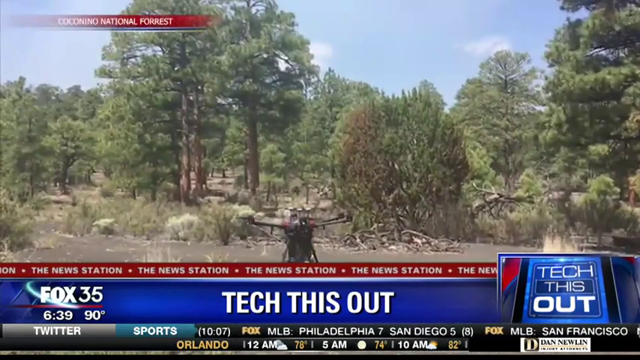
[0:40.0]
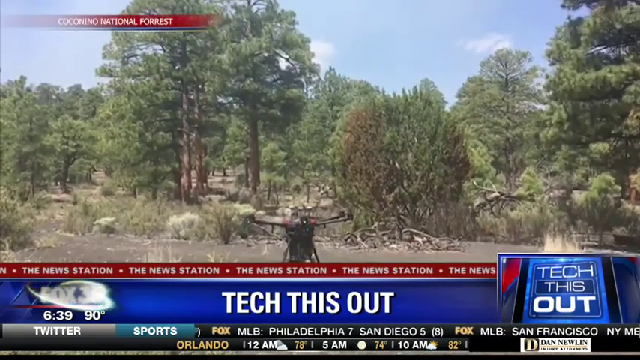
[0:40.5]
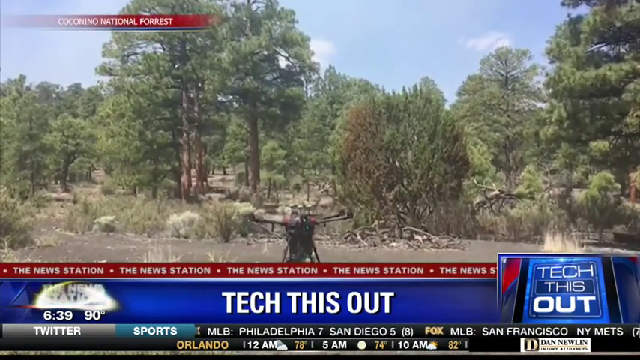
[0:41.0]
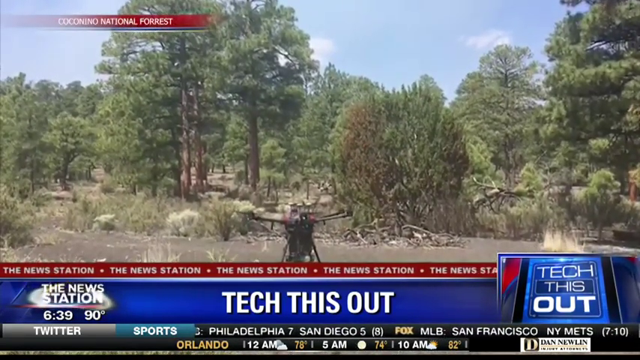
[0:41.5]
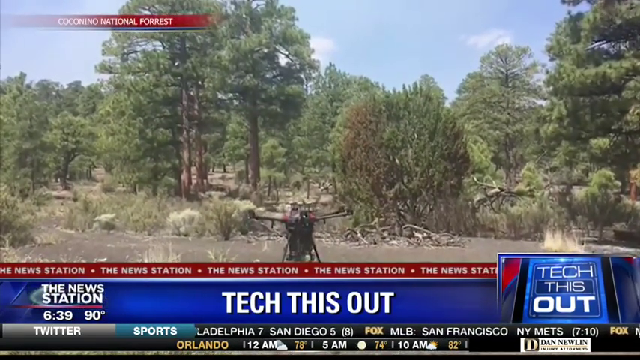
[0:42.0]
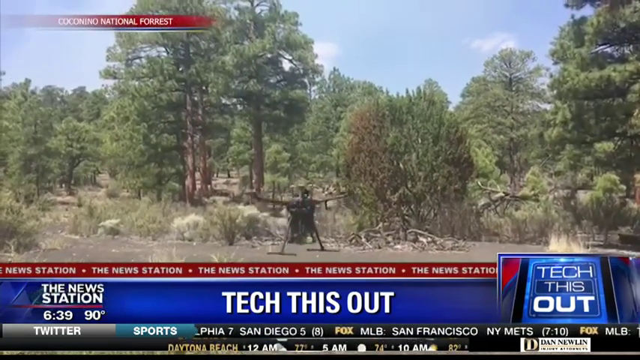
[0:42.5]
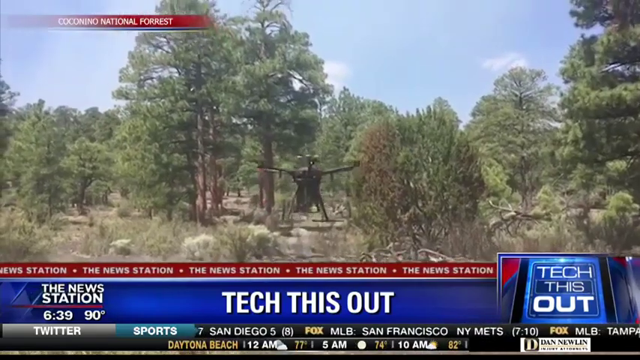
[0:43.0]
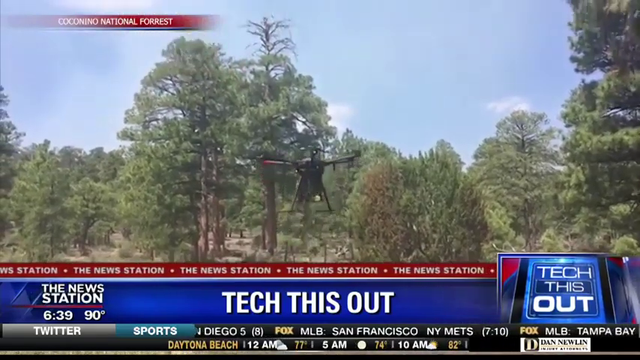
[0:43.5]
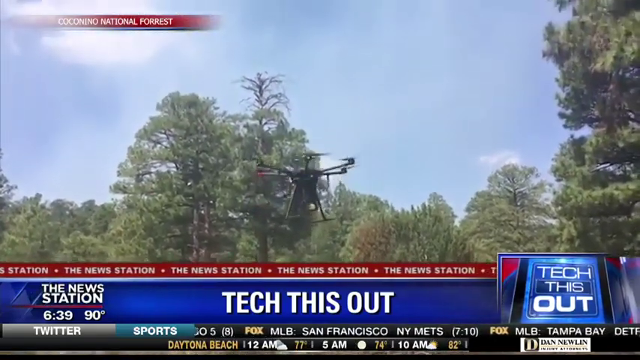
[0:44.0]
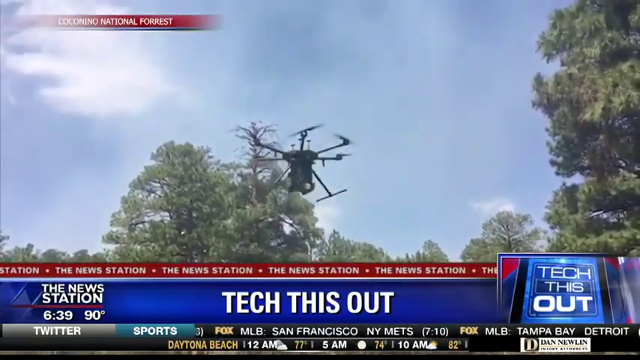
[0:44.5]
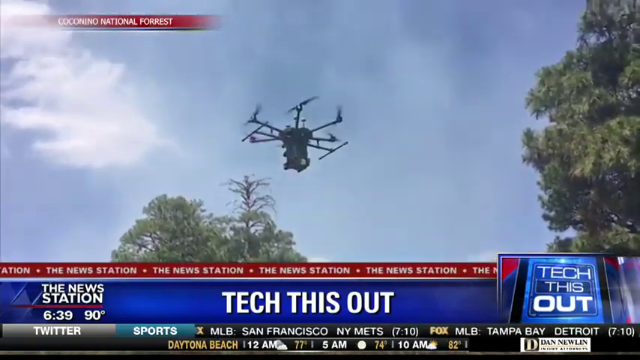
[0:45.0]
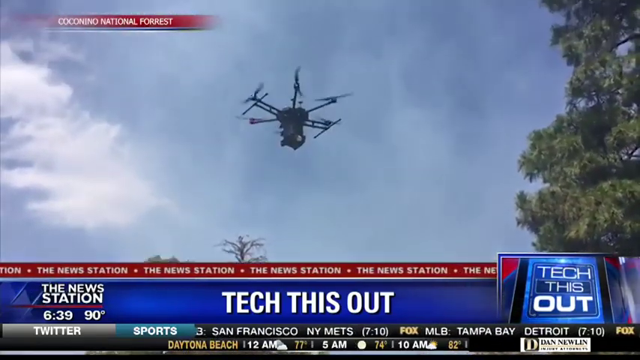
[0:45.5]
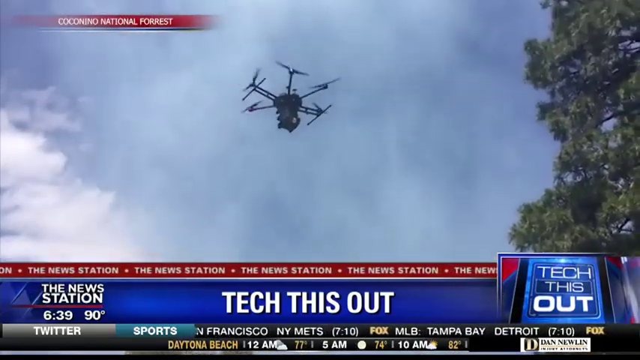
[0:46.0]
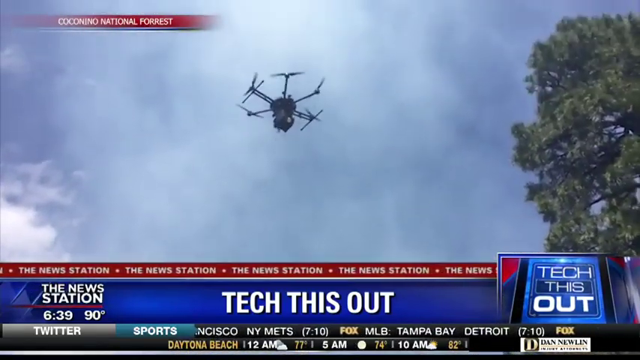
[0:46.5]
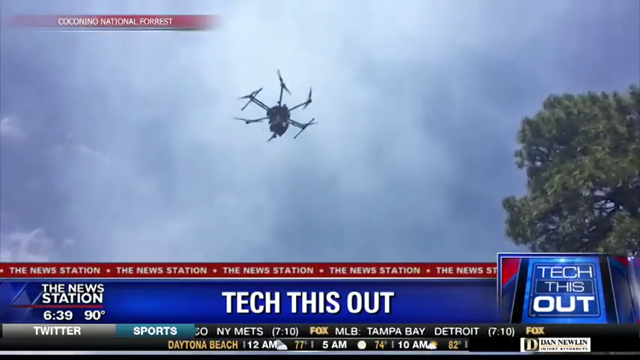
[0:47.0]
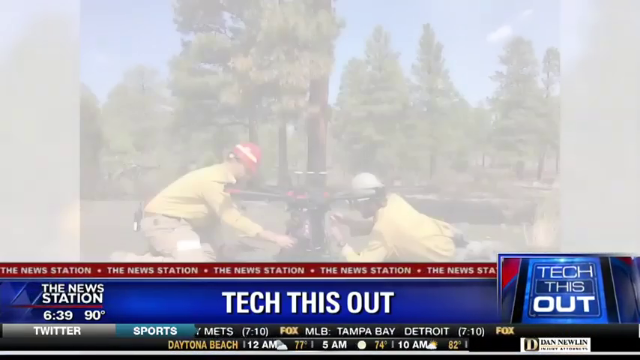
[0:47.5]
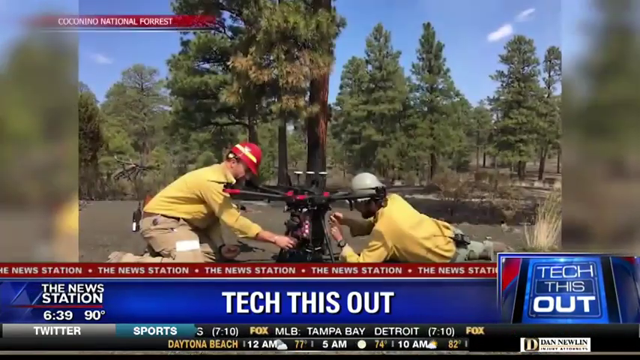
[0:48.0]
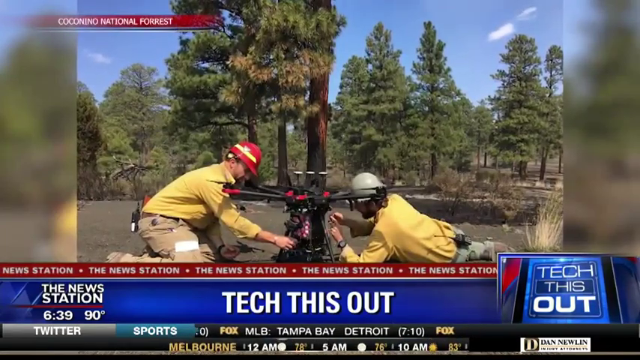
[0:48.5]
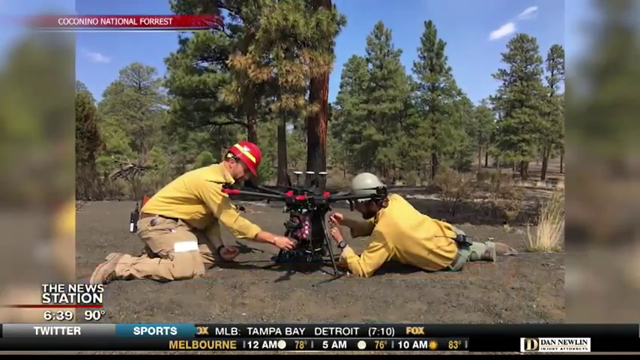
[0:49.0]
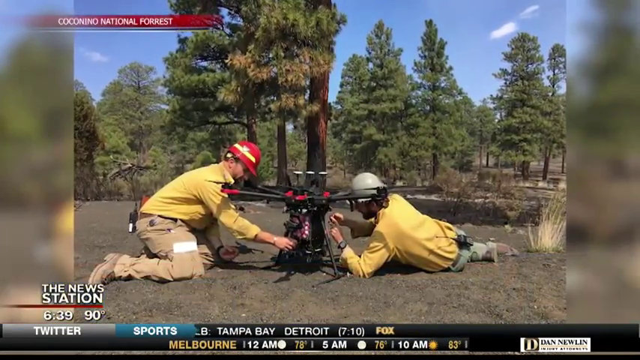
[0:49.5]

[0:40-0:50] In a forest, a drone intended to help fight wildfires is prepared for takeoff on a sunny day, with just a few wisps of hazy cloud high in the sky. It is quite a large drone, apparently with about six or eight rotor blades. Two engineers in yellow shirts and hard helmets work on it, and then it takes off from a clearing and flies up and away. Weather forecasts show Orlando at 78 degrees at midnight, rising to 82 degrees at 10am tomorrow morning; Daytona Beach is very similar, while Melbourne will be hotter, hitting 83 degrees at 10am. The broadcast is sponsored by Dan Newlin, and the drone footage comes from the Cococino National Forest.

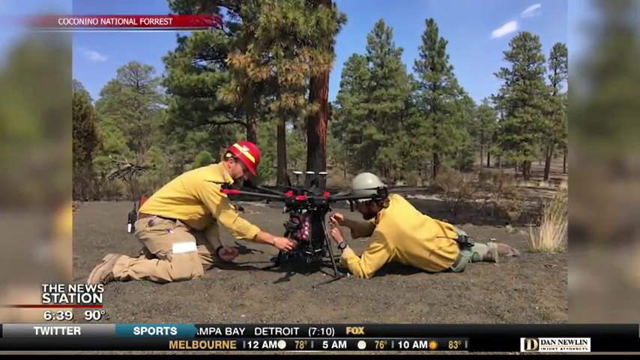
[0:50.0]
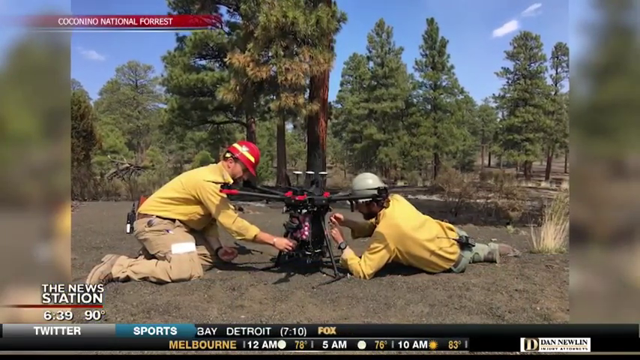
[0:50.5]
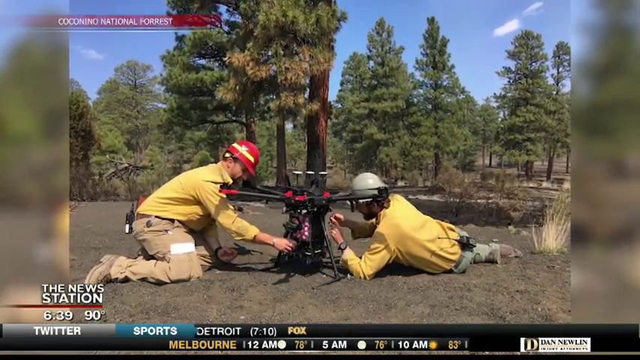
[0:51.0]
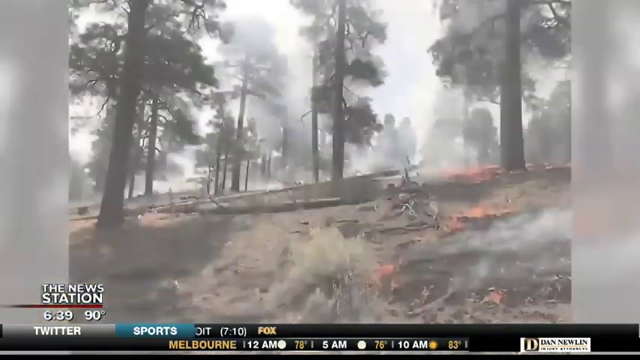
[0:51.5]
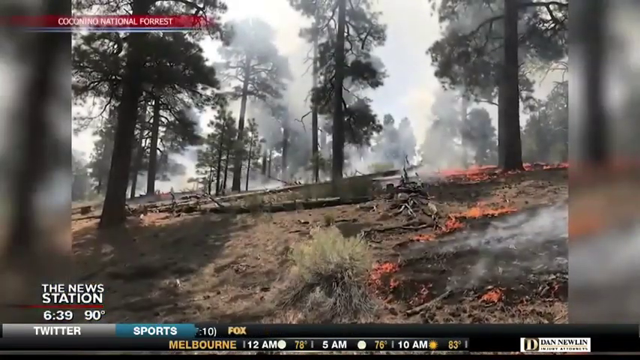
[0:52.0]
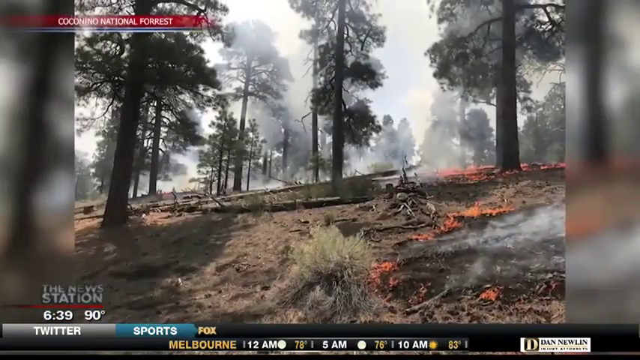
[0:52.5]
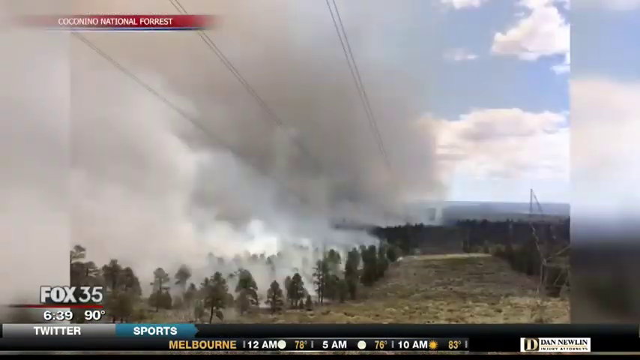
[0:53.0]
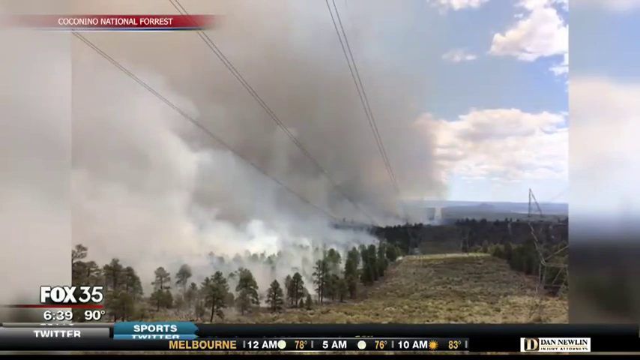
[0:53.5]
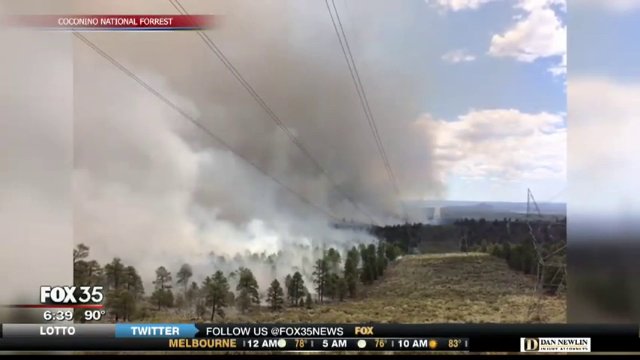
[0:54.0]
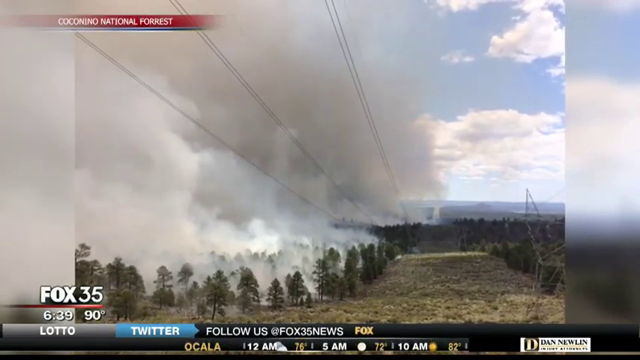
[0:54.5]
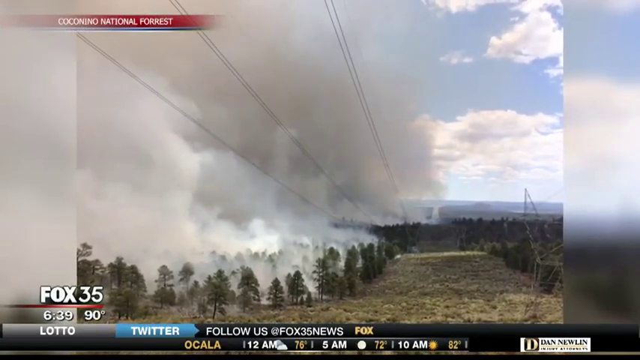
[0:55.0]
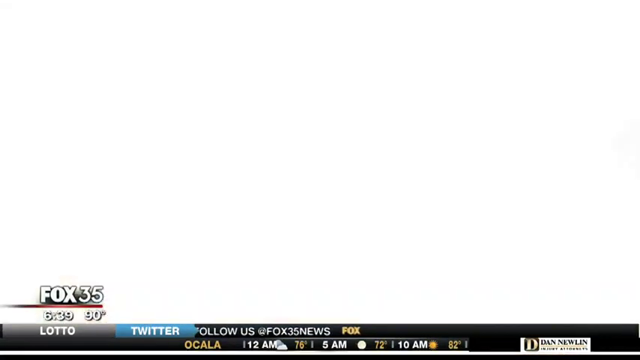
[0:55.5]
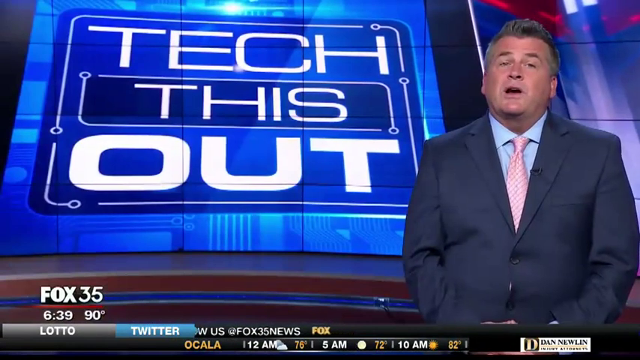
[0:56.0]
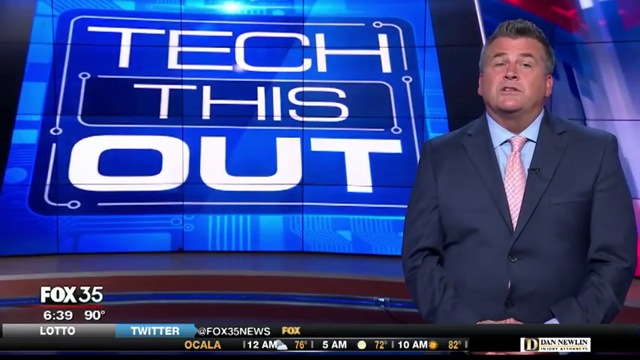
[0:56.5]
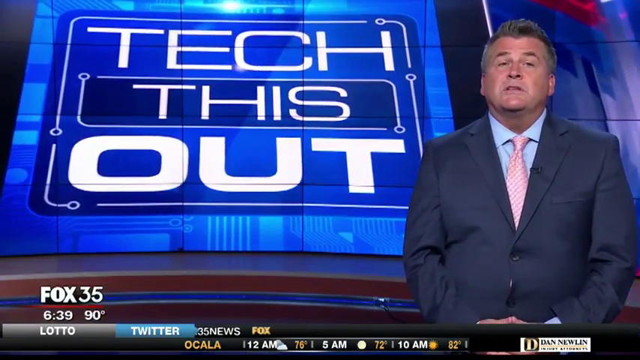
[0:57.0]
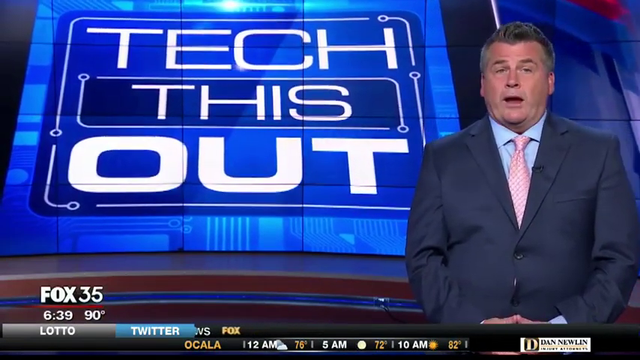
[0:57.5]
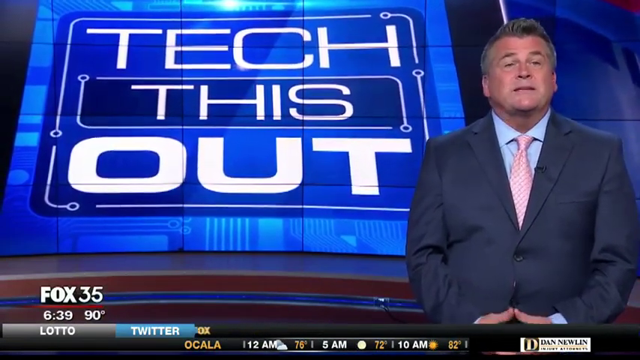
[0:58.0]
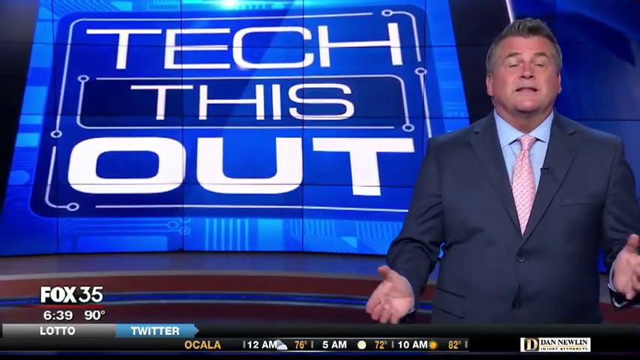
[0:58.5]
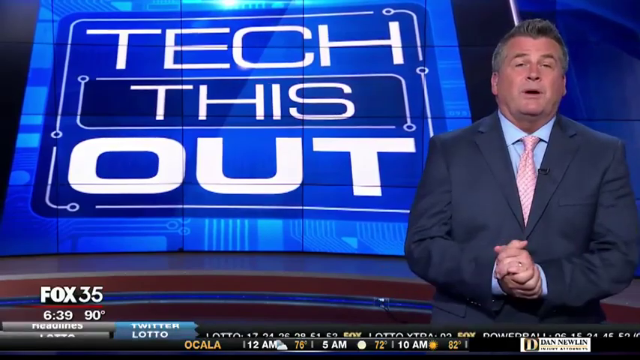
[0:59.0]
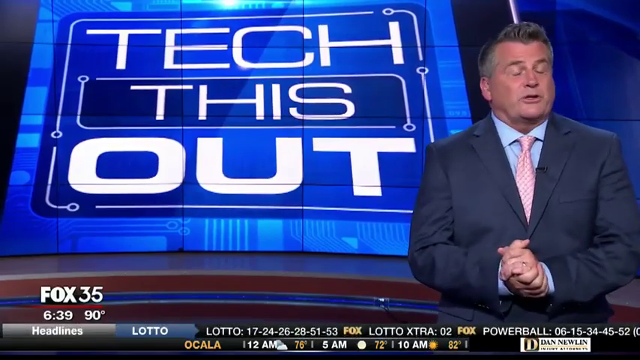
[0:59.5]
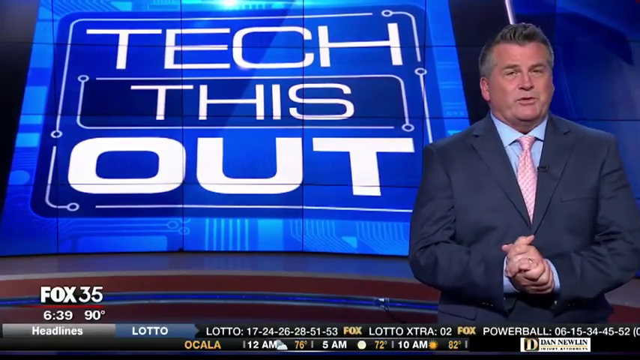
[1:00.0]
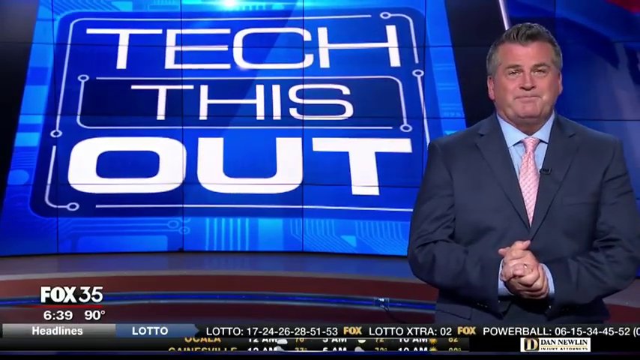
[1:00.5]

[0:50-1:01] Forest fires are filmed from above, with a large amount of smoke rising, though it is not raining. The broadcast returns to the news studio, where the anchor wraps up the short news item. More baseball listings appear: Boston–Kansas City starts at 8.15 and Houston–Seattle starts at 10.10. The forest fire footage shows more undergrowth burning quite heavily, while the large trees around it have not caught fire.